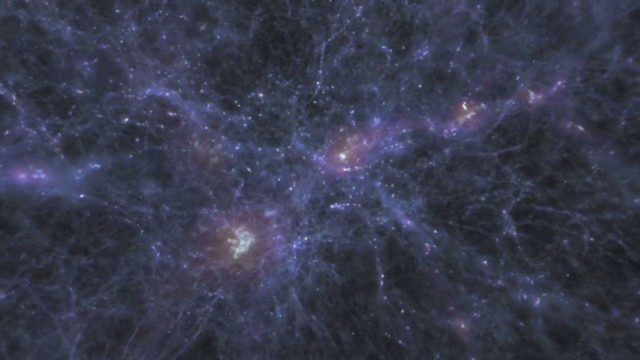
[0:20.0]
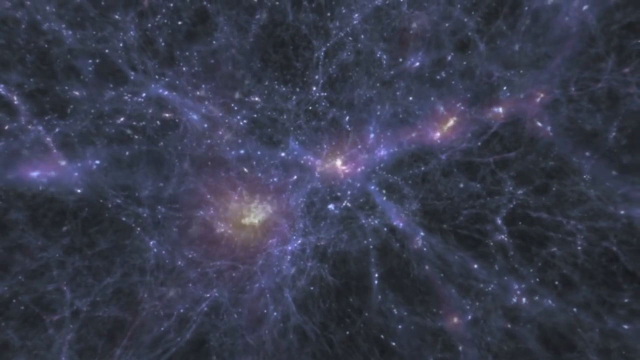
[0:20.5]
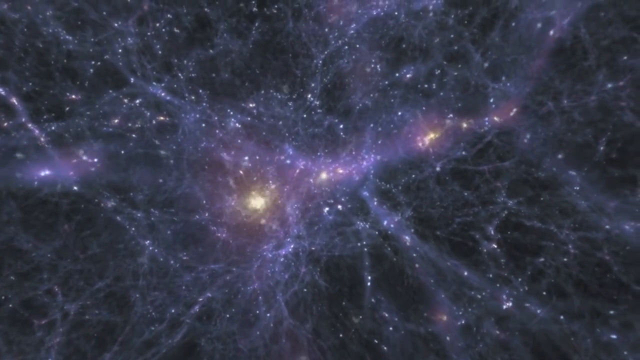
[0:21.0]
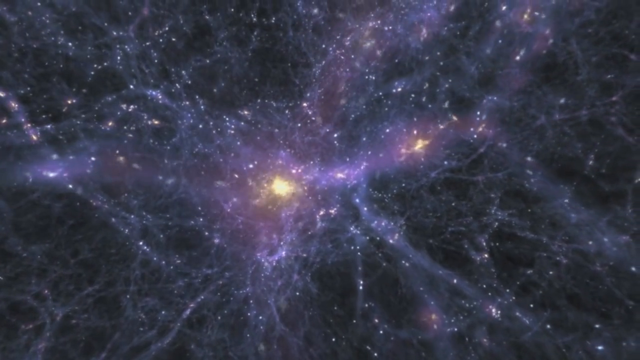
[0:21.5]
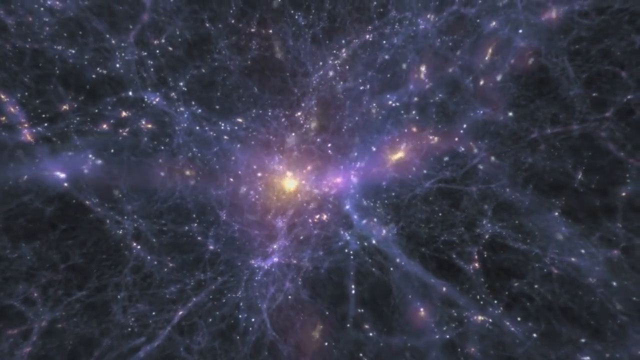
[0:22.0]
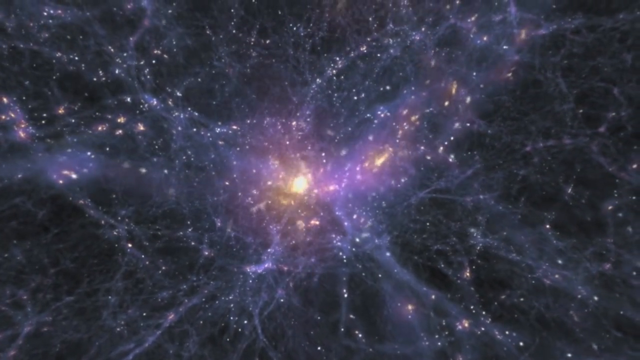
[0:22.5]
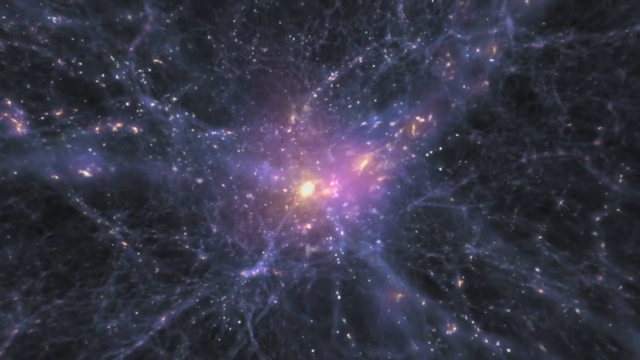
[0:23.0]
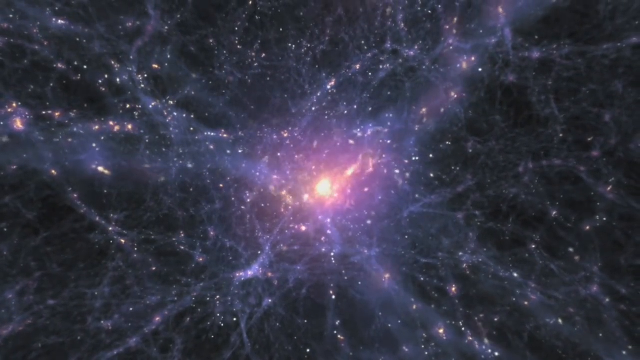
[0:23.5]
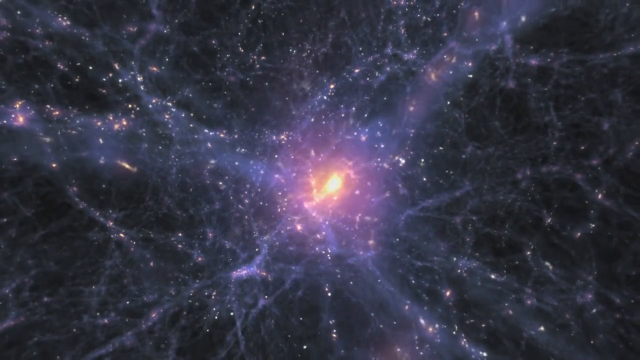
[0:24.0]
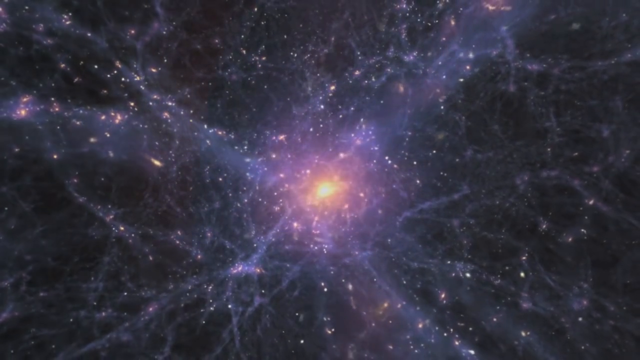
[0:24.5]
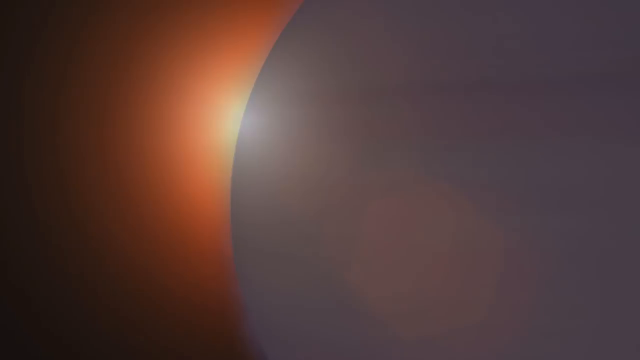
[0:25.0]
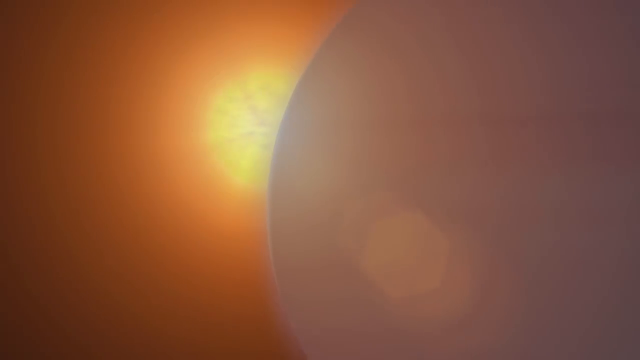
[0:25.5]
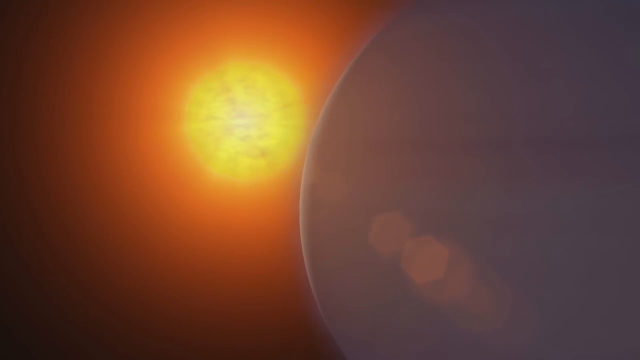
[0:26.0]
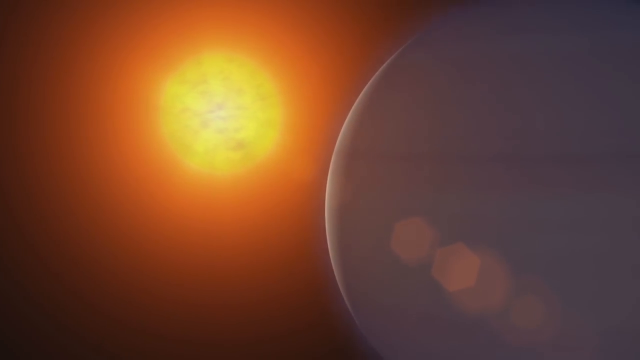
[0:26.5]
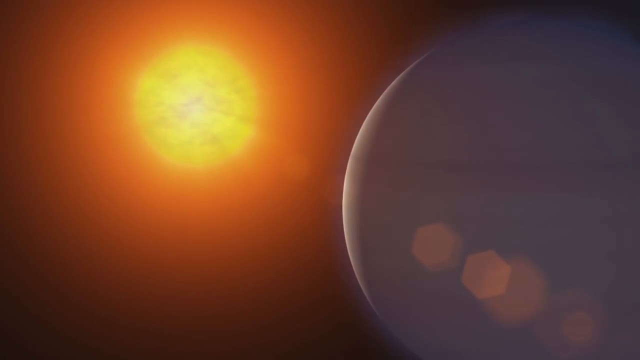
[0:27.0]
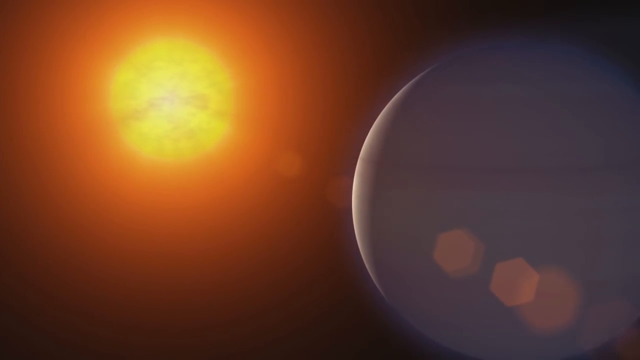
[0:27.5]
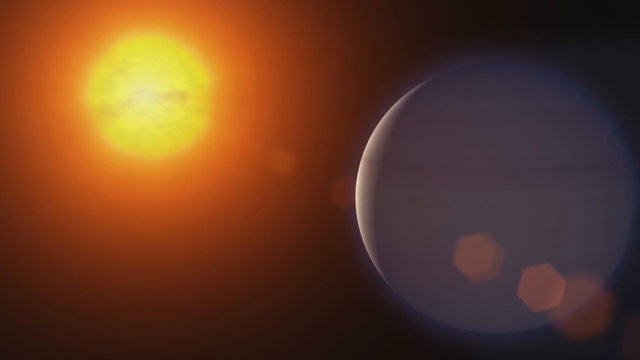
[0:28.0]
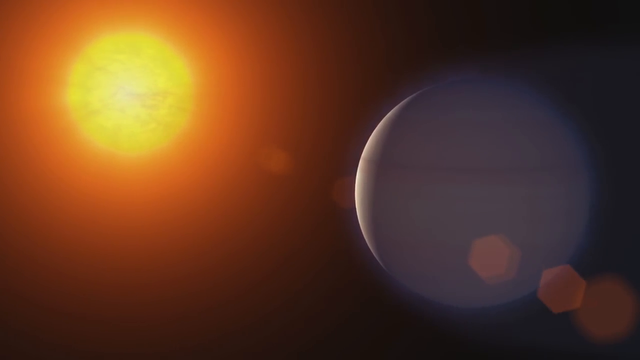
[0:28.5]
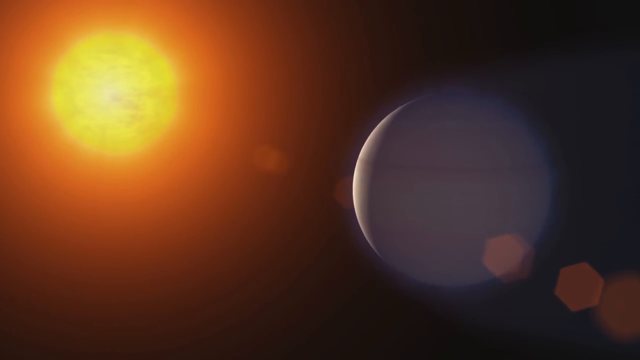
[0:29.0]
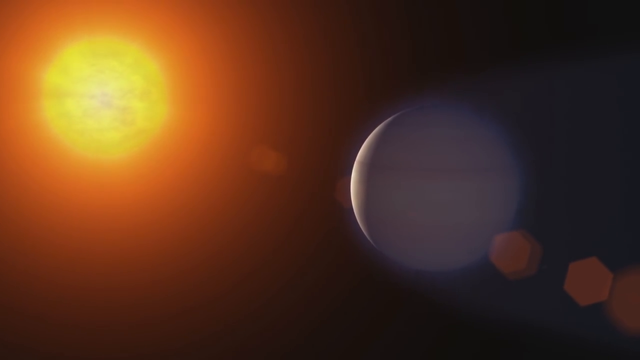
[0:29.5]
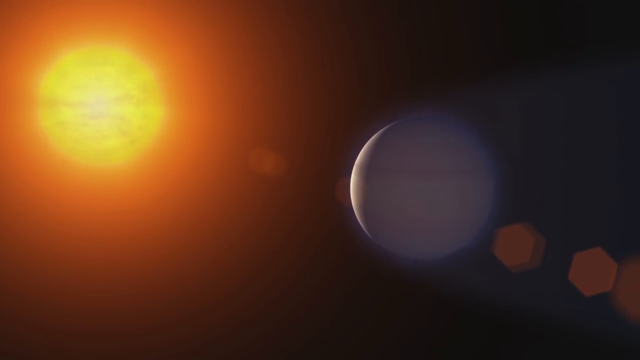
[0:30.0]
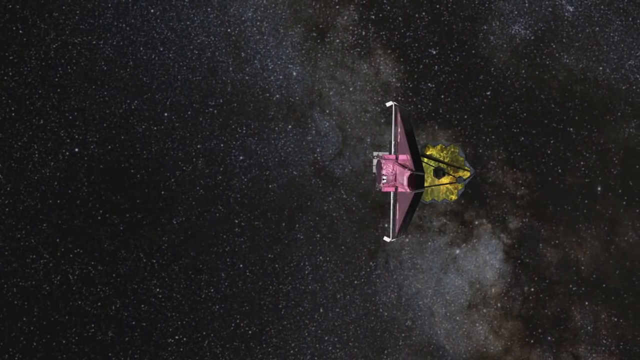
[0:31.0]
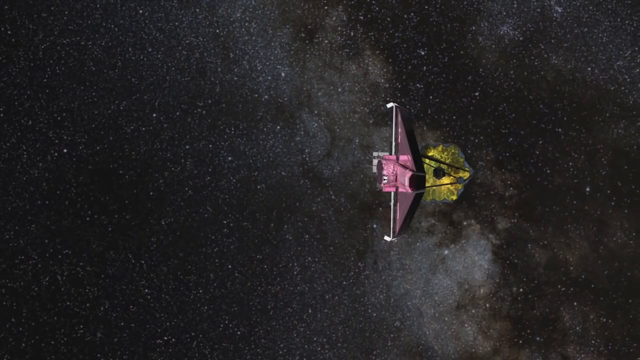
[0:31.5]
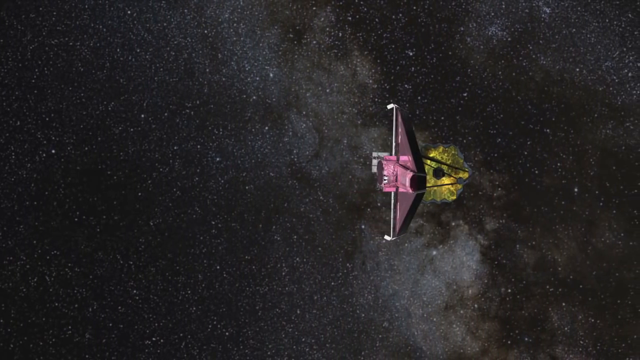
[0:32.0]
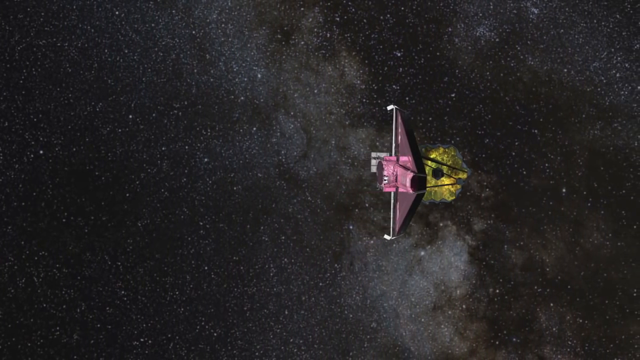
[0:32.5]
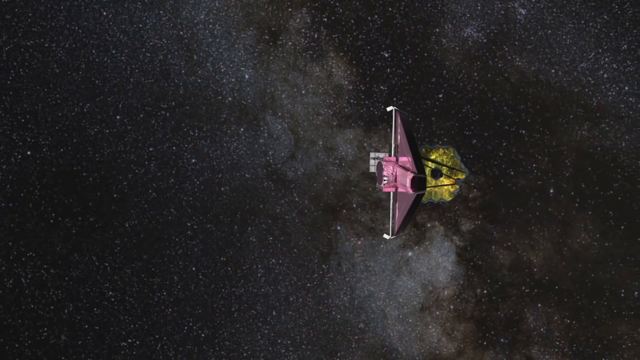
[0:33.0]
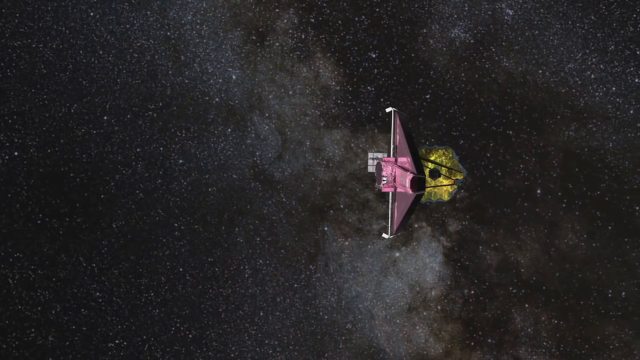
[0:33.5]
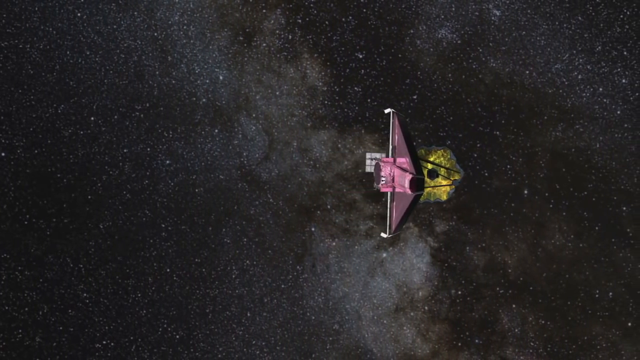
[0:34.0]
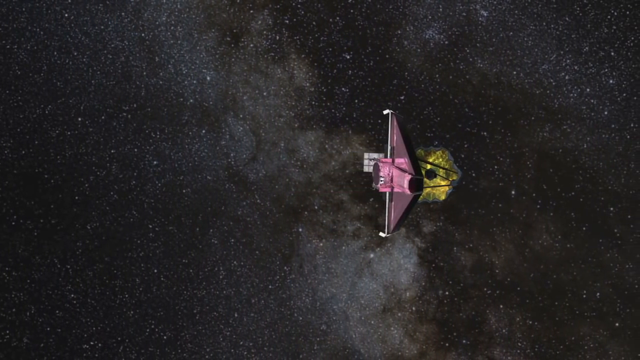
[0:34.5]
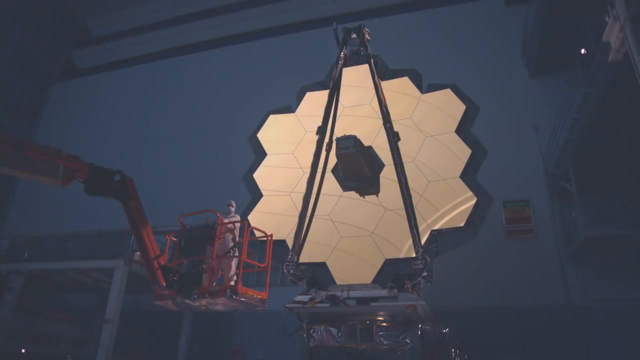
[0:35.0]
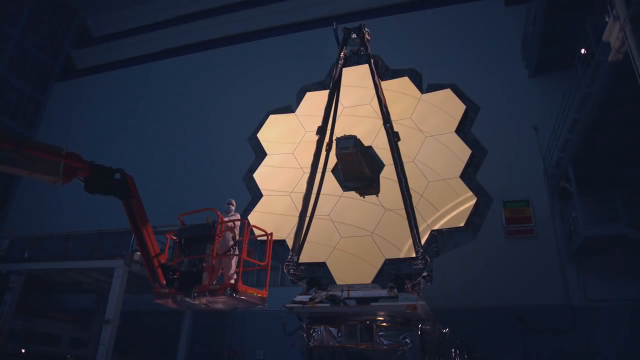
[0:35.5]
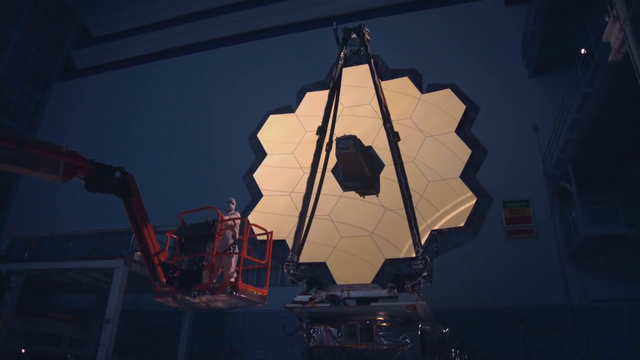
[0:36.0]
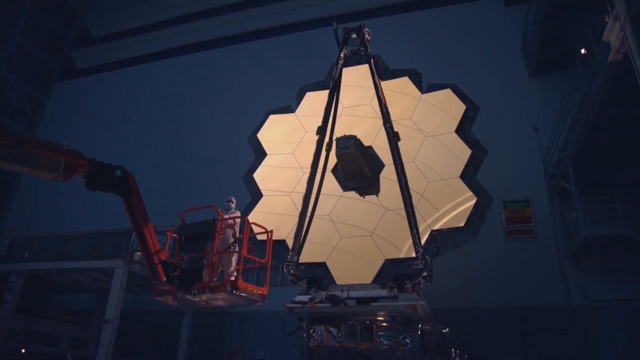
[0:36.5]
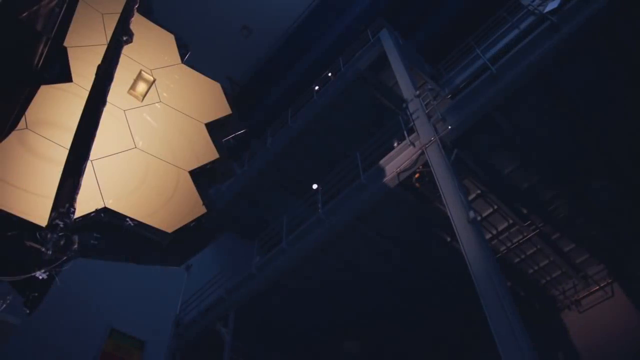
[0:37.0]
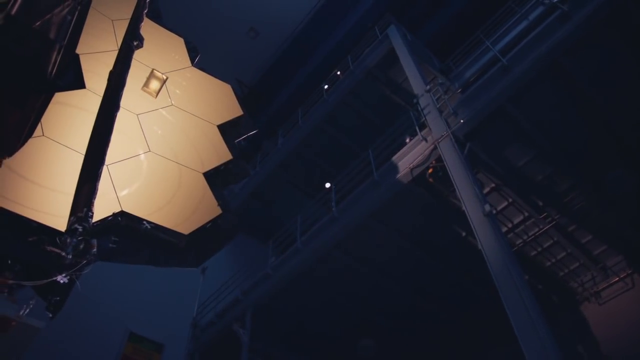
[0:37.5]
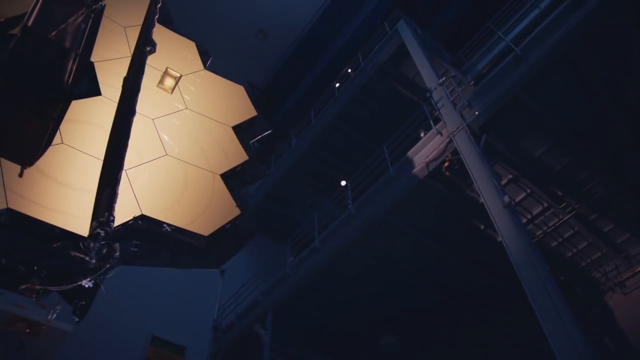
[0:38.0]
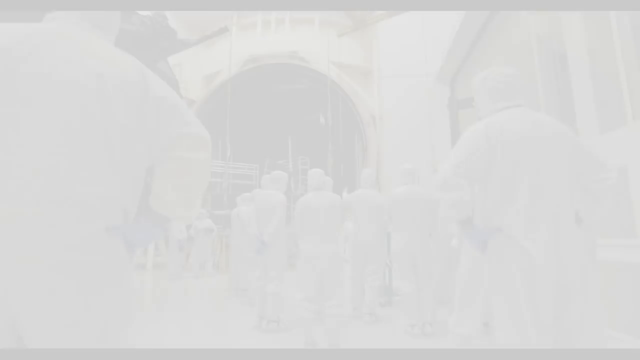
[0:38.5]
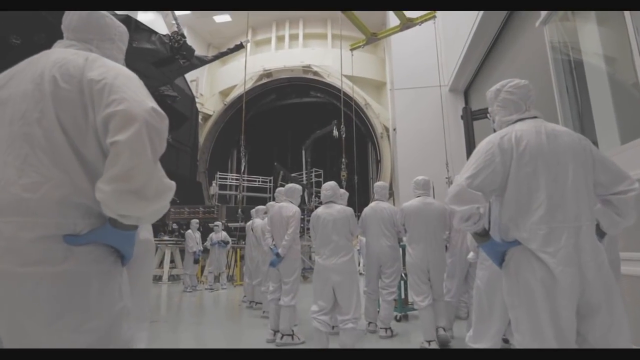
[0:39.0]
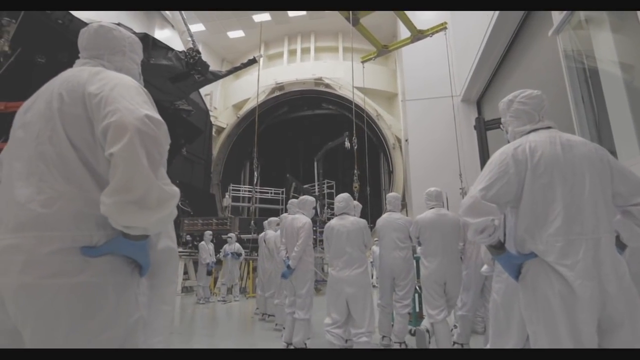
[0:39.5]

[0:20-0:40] A large planet appears very near the sun. A diamond-shaped red satellite flies through the air, capturing images from outer space. The scene moves to an up-close image of the satellite, showing the many pentagon-shaped structures that make up the entire satellite. Next, a group of people in white lab coats and blue gloves appears; quite a few of them wear full-body suits. They are in an all-white room with metal structures in the background. The person closest to the camera stands with a hand on their hip; one person stands with a hand on their right hip and another with a hand on their left hip.